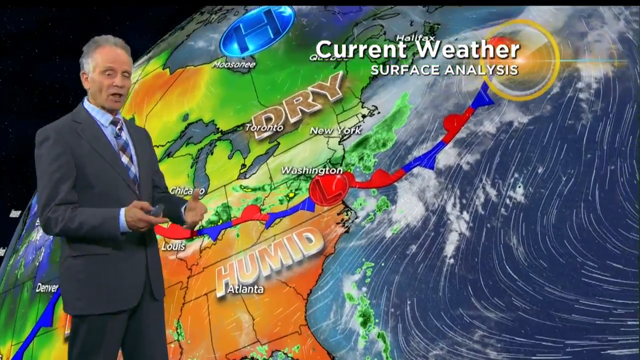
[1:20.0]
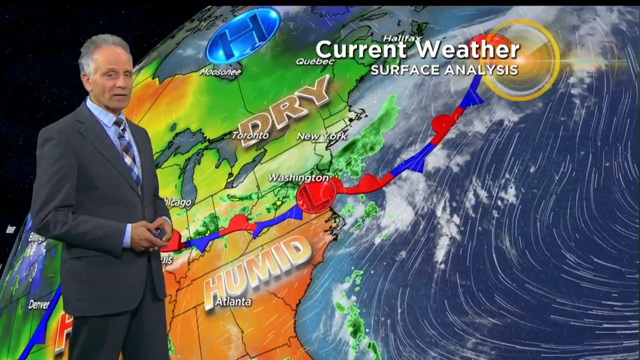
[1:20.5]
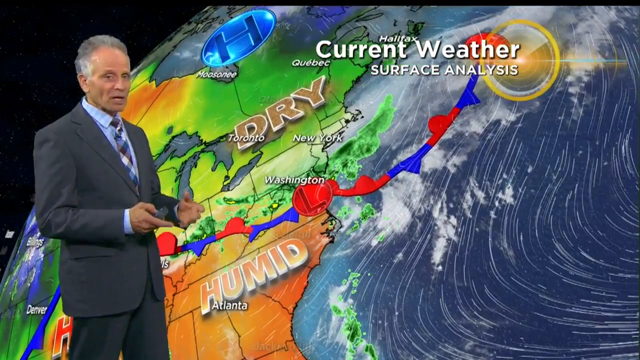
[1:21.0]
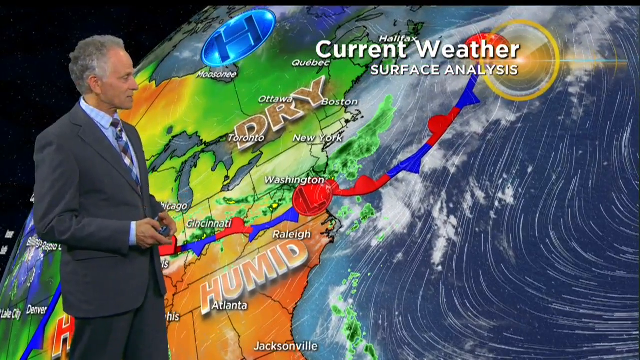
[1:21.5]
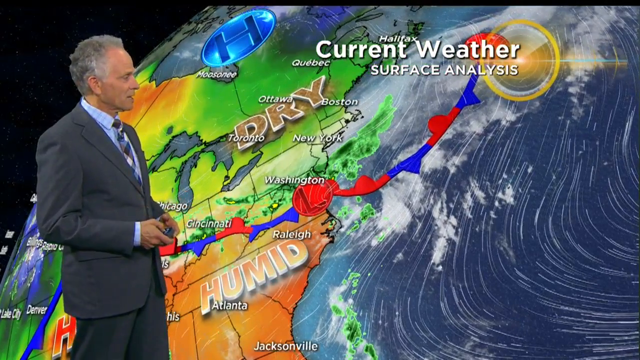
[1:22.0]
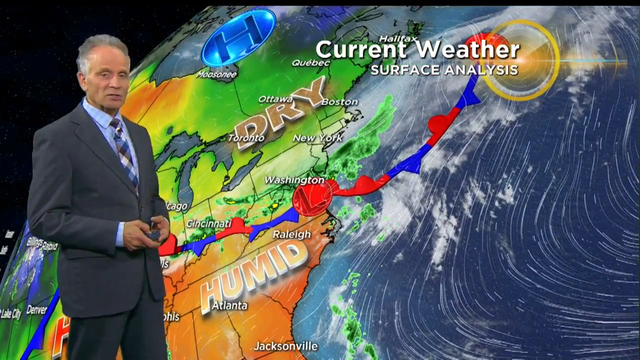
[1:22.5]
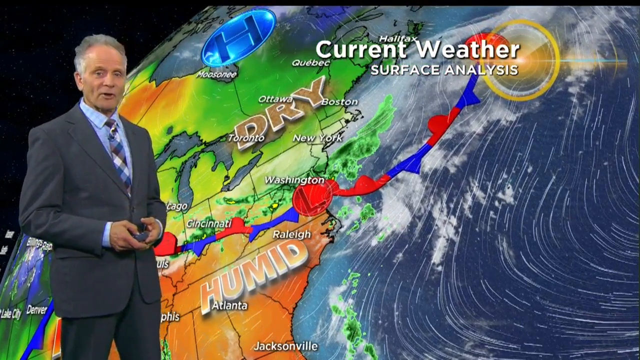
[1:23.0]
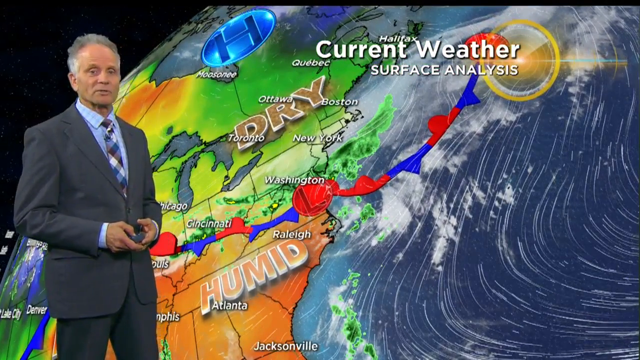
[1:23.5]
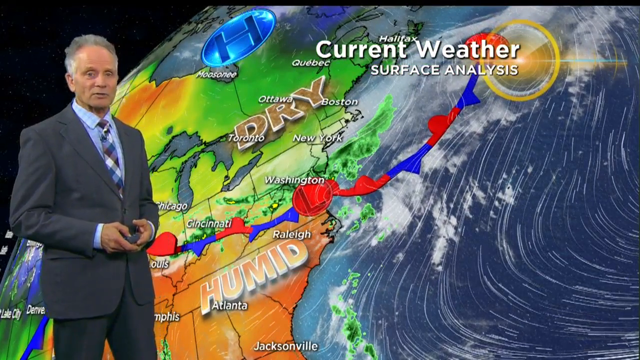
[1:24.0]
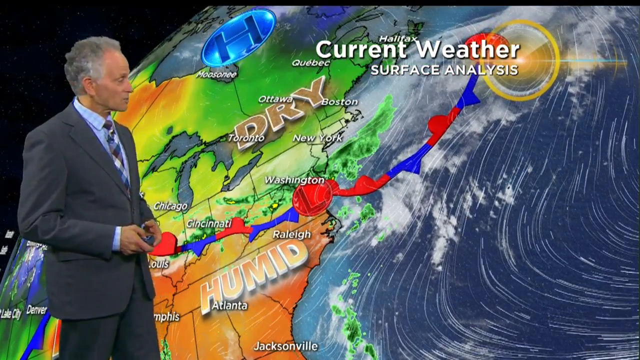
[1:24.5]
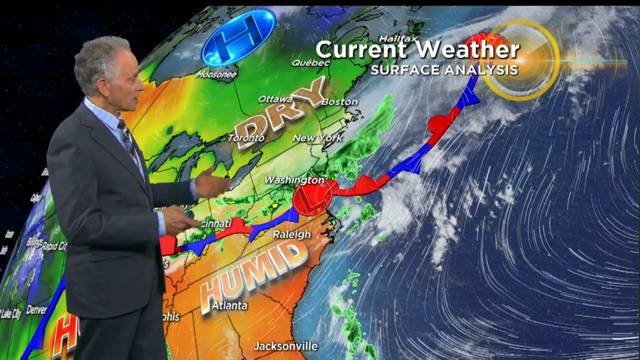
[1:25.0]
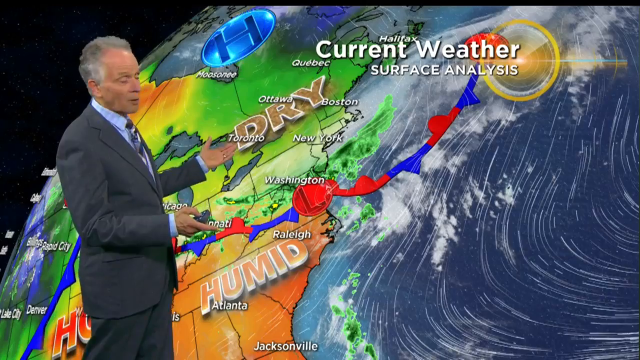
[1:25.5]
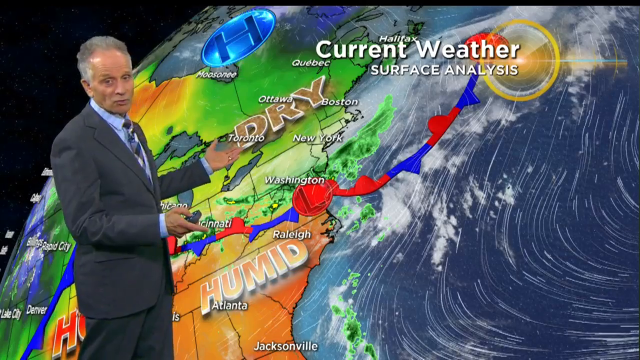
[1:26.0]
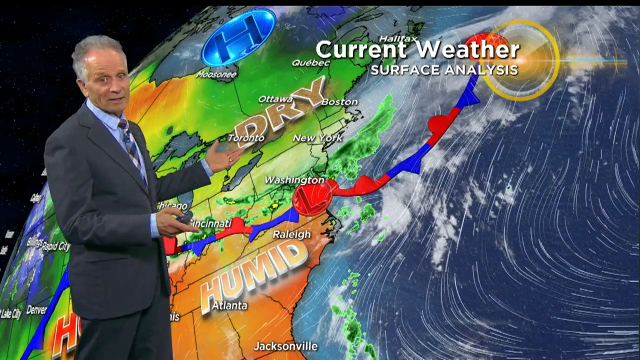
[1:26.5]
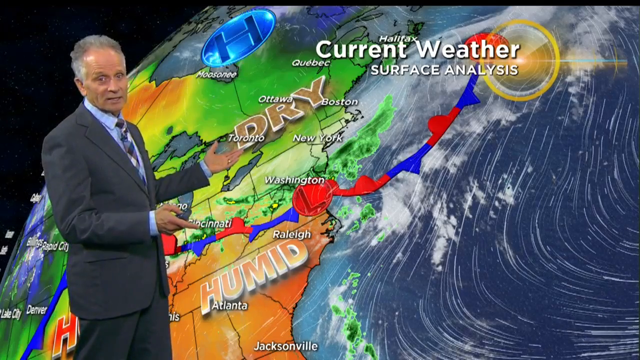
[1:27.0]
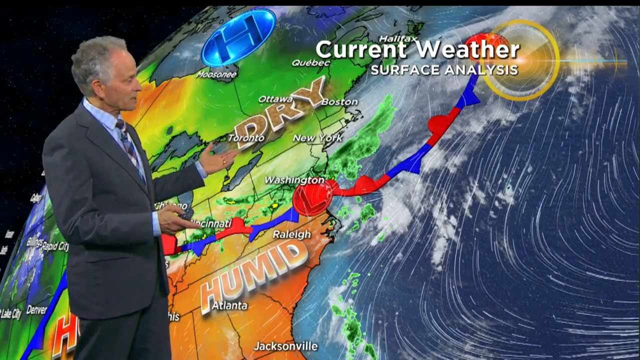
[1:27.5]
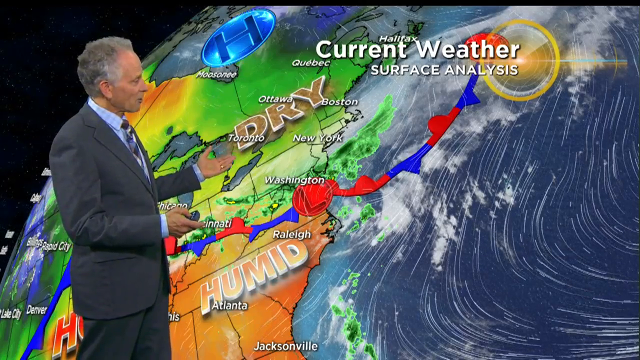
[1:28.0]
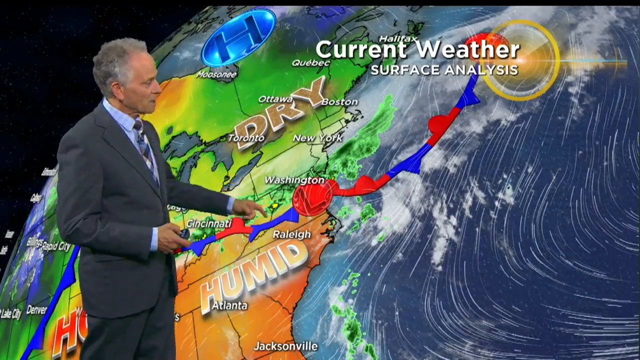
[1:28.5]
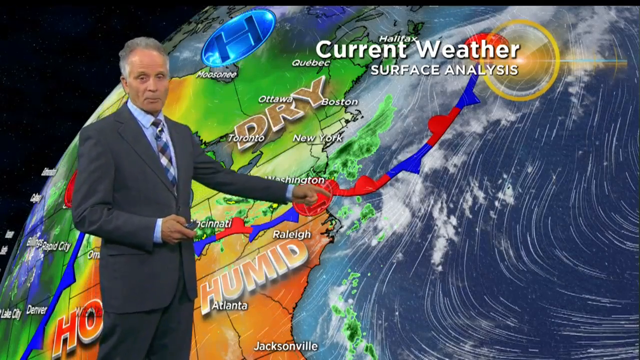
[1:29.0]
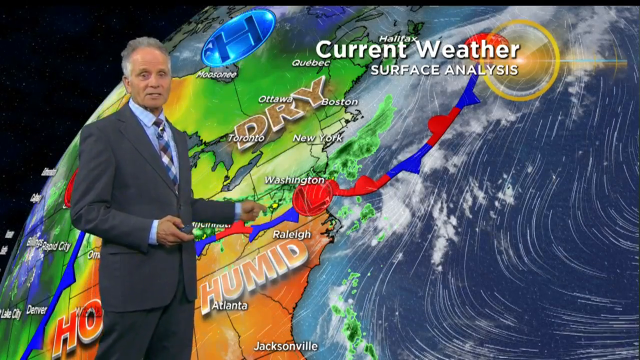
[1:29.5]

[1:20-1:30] The map of the country zooms in toward the east. "Humid" appears in orange at the bottom and "dry and green" at the top, and some sort of blue and red thing goes across it showing a weather pattern. The view keeps zooming in toward the right. The meteorologist, in a grey suit, light blue shirt and checkered tie, is talking while turned to the side and pointing at the map. At the very top left is an "H" in a blue circle, and clouds and lines move toward the right over dark water. The display then flashes to another screen.